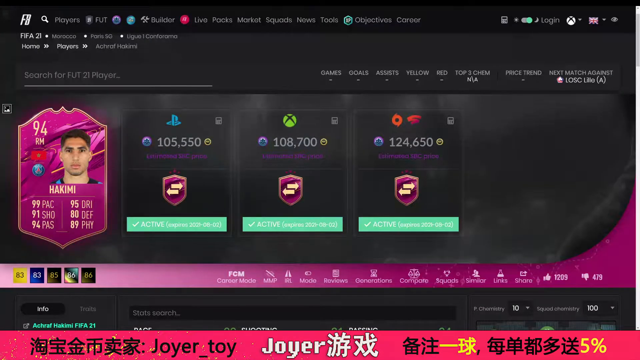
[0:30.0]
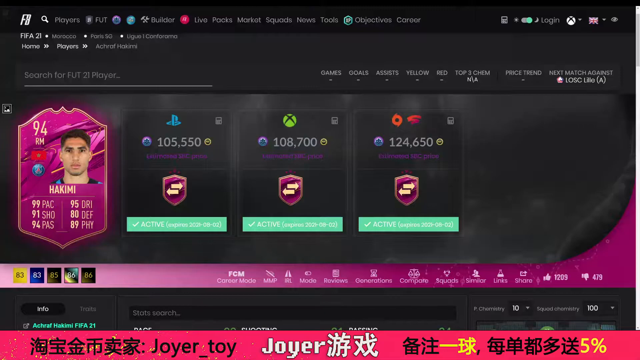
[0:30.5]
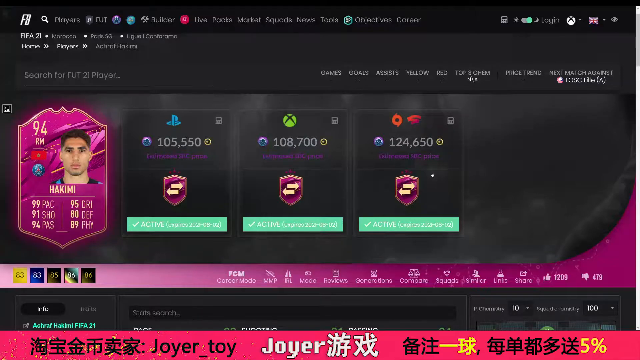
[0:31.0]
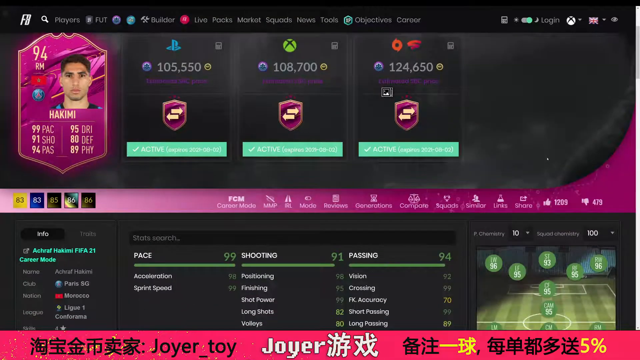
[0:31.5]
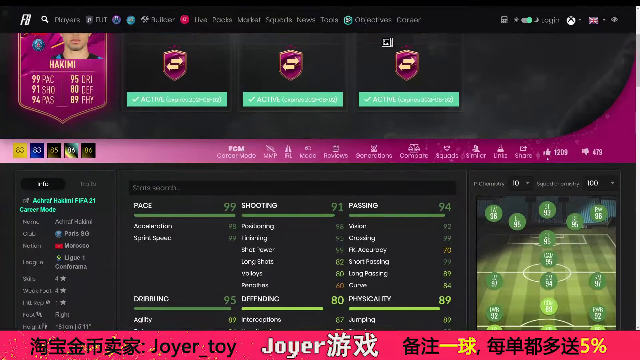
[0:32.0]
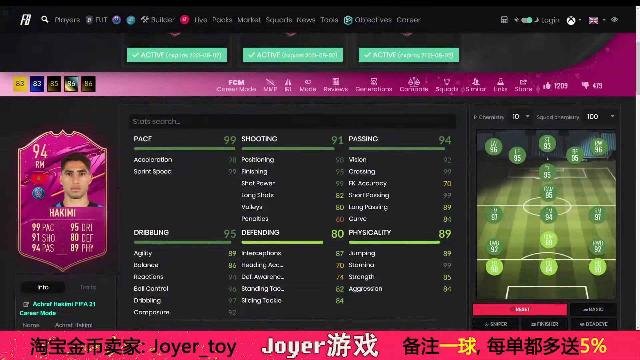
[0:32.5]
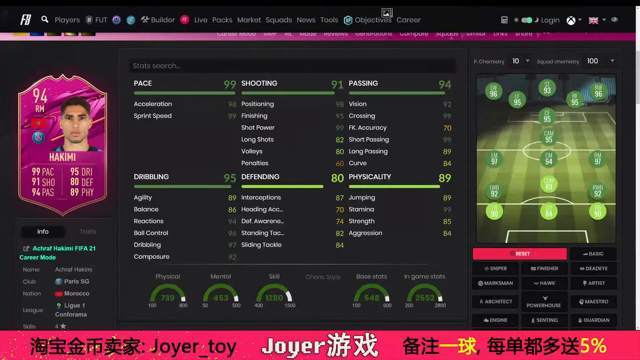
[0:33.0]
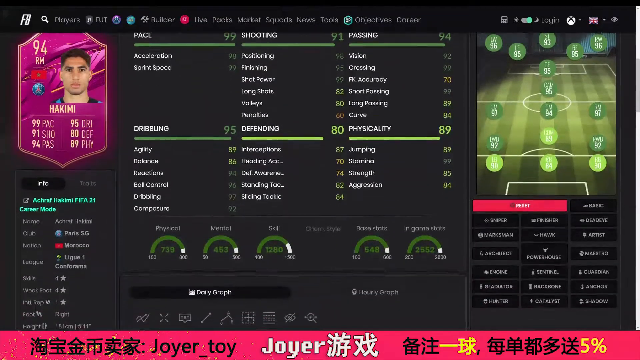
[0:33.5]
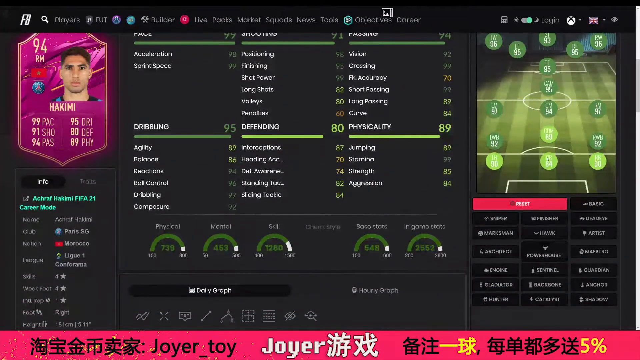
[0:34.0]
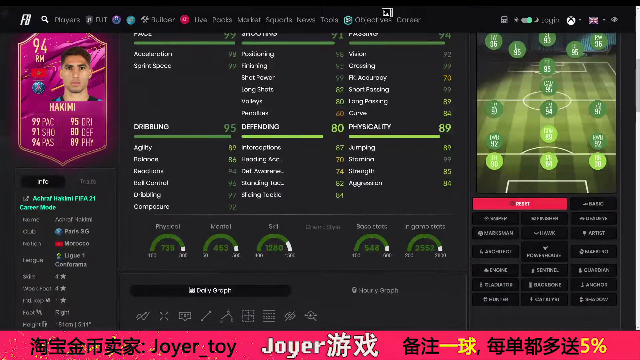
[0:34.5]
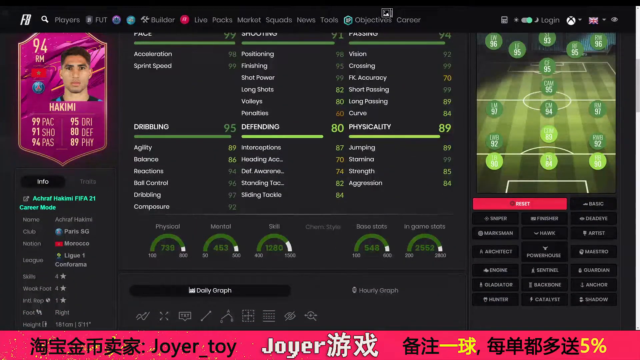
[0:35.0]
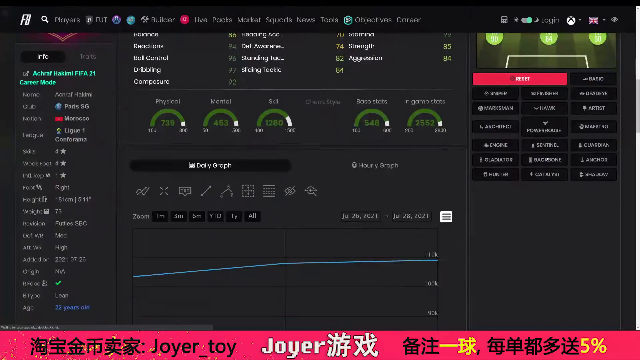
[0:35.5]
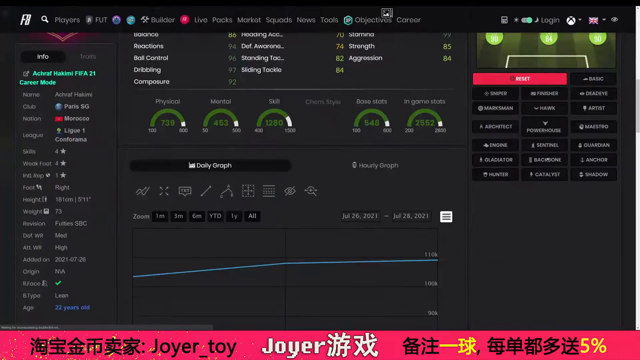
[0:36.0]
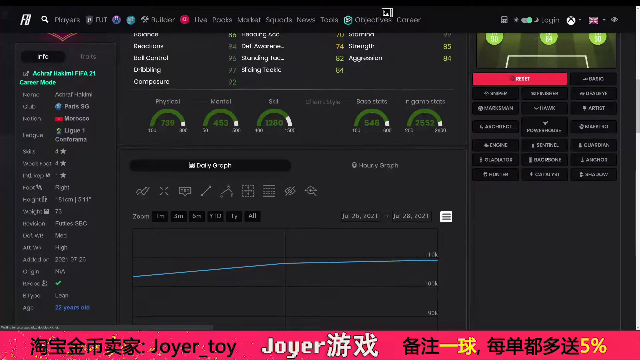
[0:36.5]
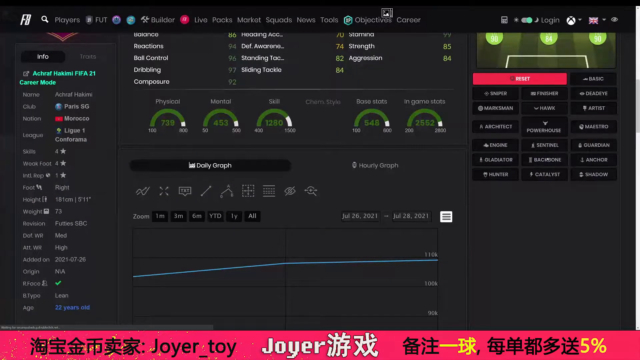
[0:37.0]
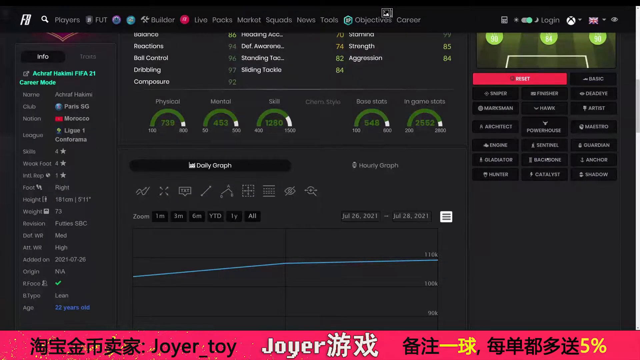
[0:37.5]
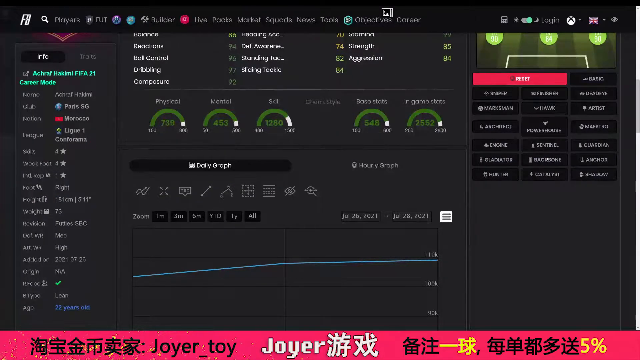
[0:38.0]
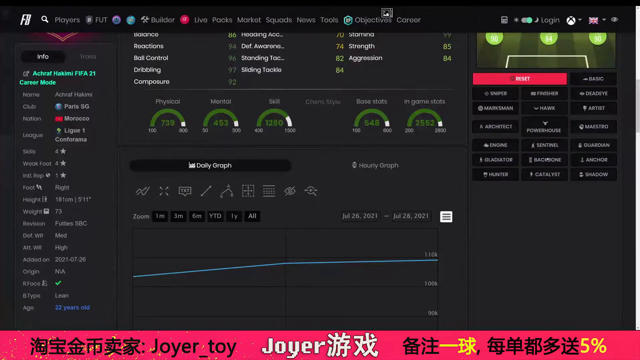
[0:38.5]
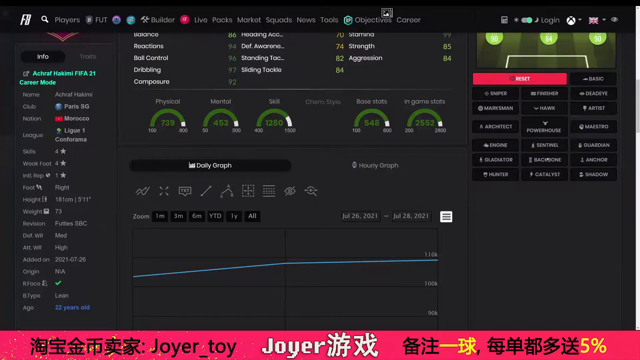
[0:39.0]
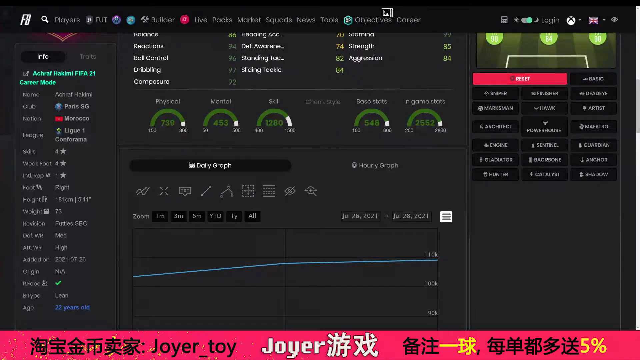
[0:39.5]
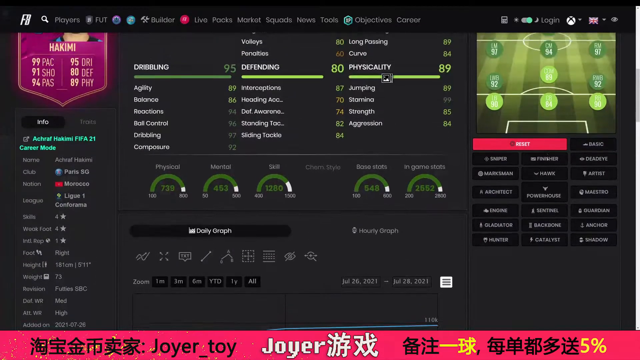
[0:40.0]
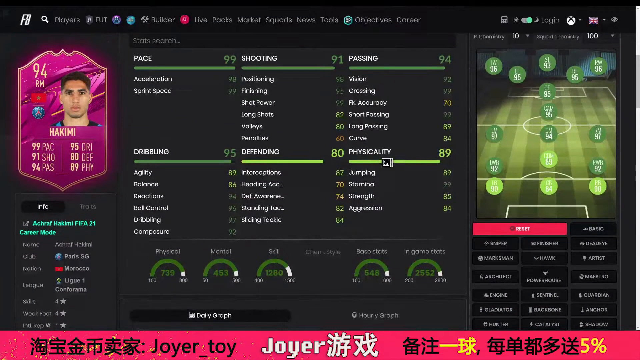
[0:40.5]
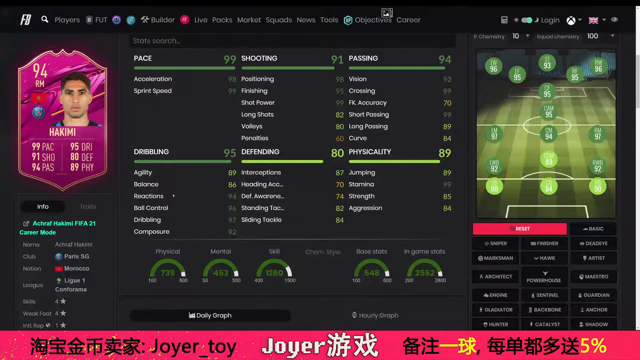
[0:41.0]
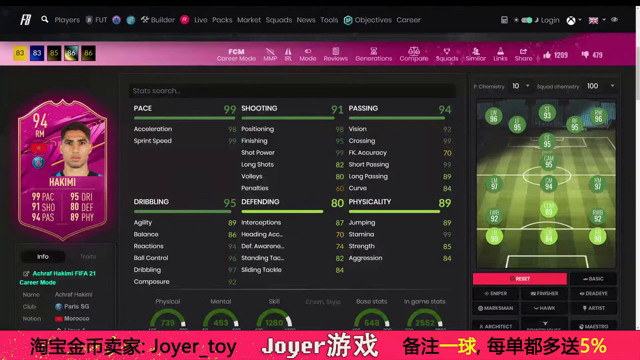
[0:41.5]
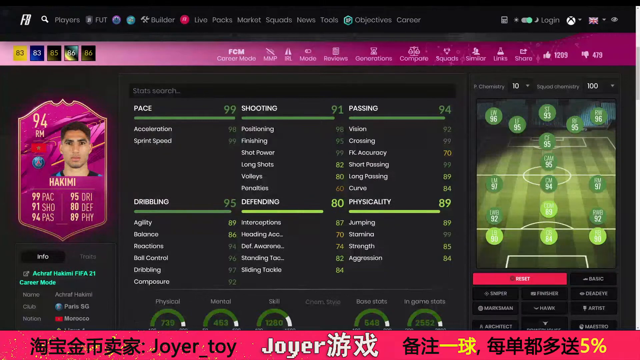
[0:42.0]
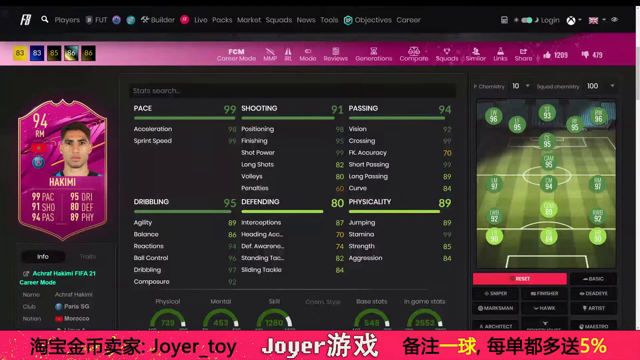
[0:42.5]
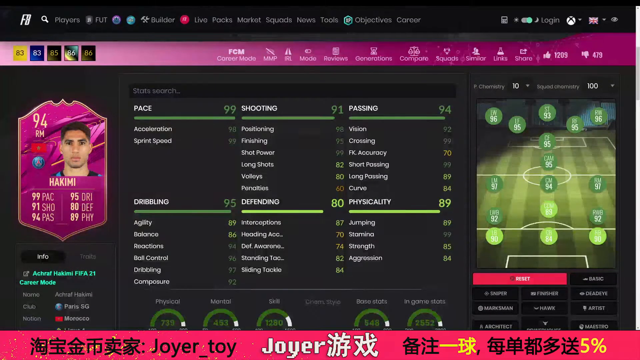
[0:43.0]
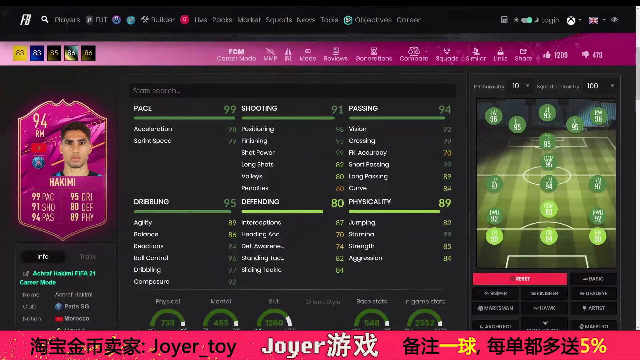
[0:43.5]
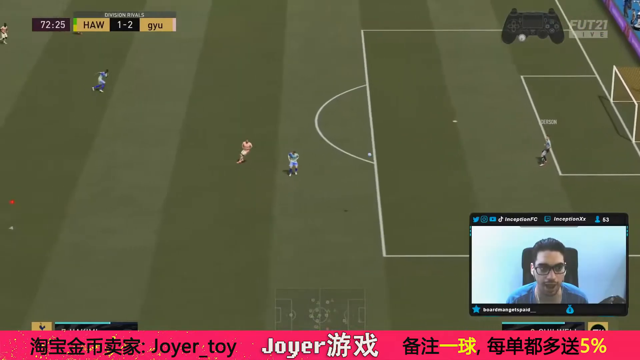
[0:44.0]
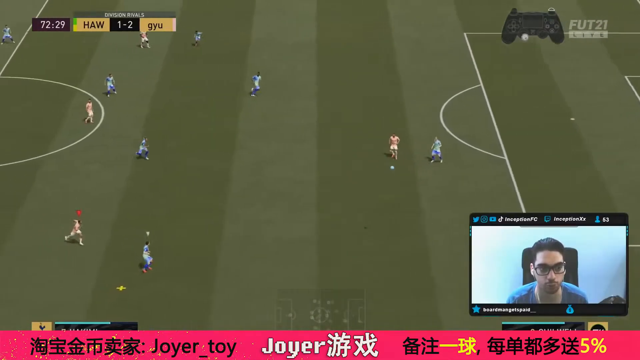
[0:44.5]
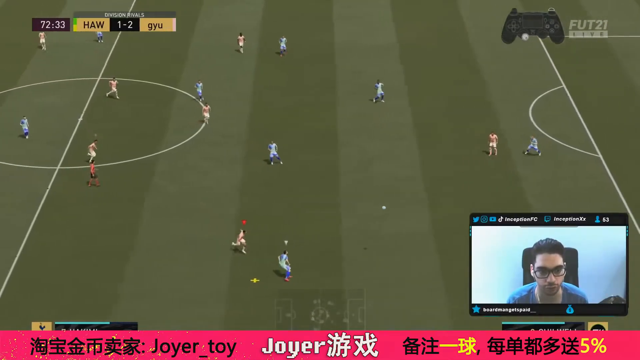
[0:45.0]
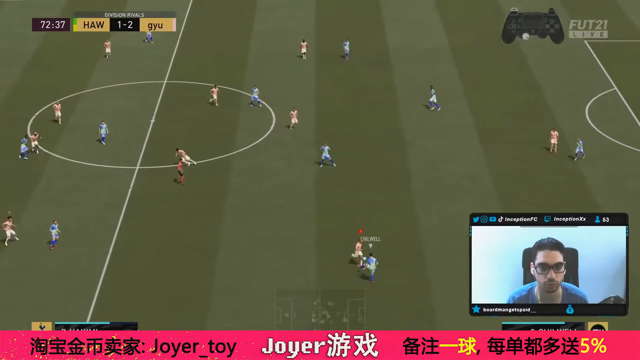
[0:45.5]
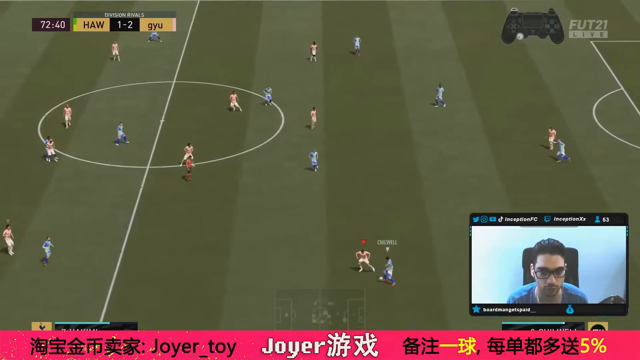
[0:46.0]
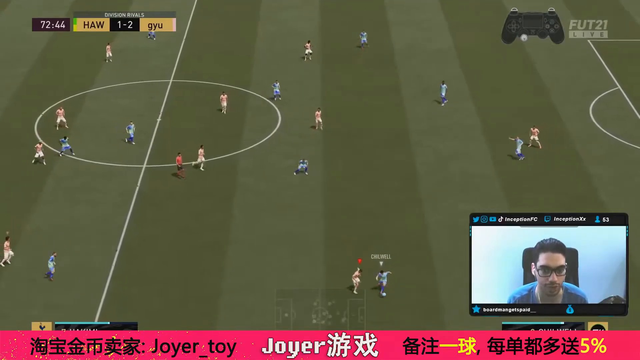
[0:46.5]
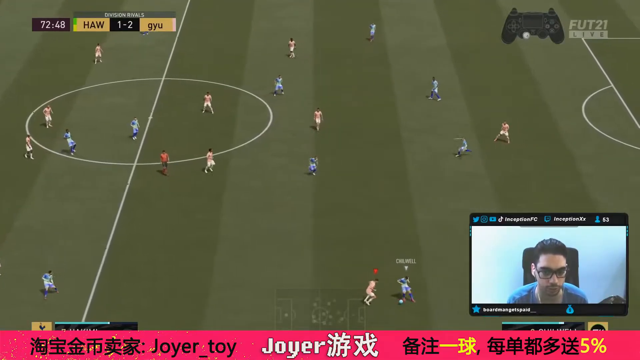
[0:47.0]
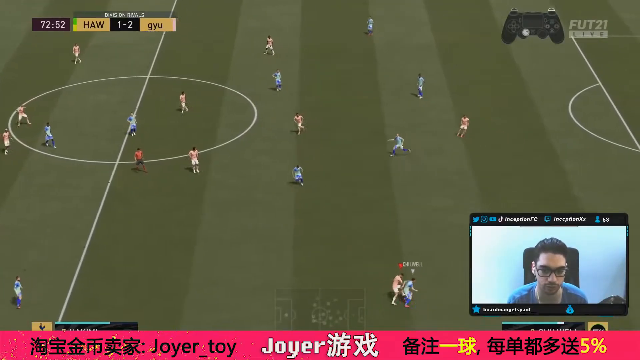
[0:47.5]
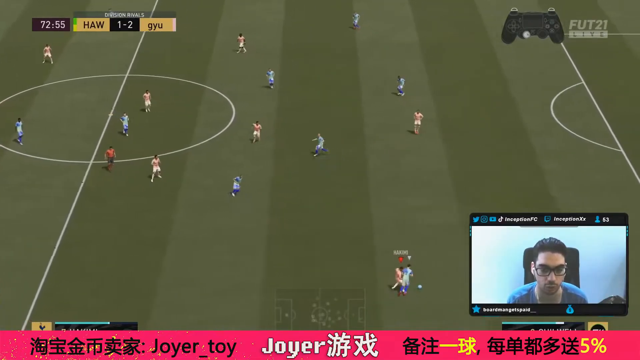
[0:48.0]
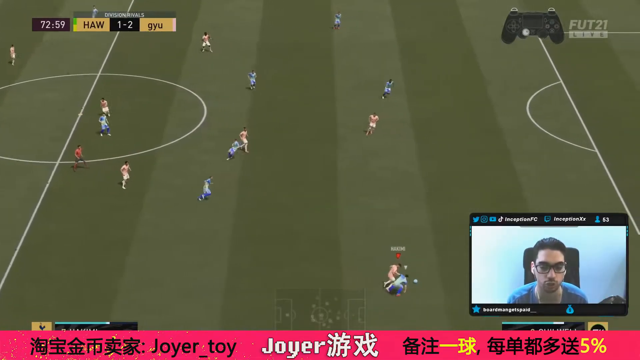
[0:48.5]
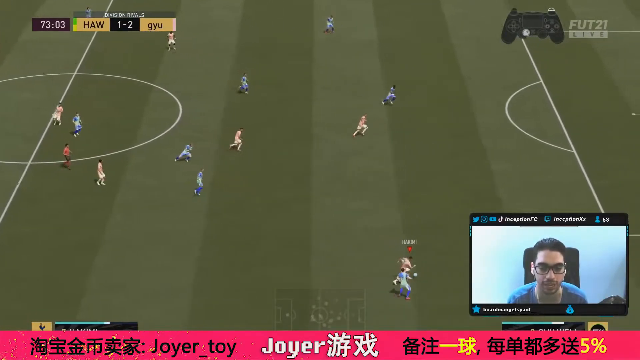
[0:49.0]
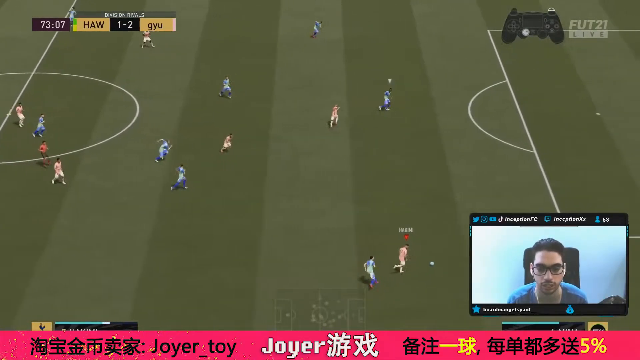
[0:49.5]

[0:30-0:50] The picture is on the person's Xbox, with a login at the top, a British flag at the top and multiple words along the top. The picture of Hakimi is shown with three logos: PlayStation, Xbox and what is possibly Steam. There appears to be an option to activate it. The person slowly scrolls down, revealing more information, apparently about a specific FIFA player, showing dribbling, defending and physicality, expanding on the abbreviated stats. Scrolling further down reveals a graph, apparently showing the player's price. The video then cuts to a person playing the game. In a box overlaid in the bottom right-hand corner is a guy with black slicked-back hair, black glasses, a mustache and a goatee, playing the FIFA game, while the game itself plays behind him. He controls one of the players in a match of HAW versus another team. He appears to be showing how this player works and the player's value.